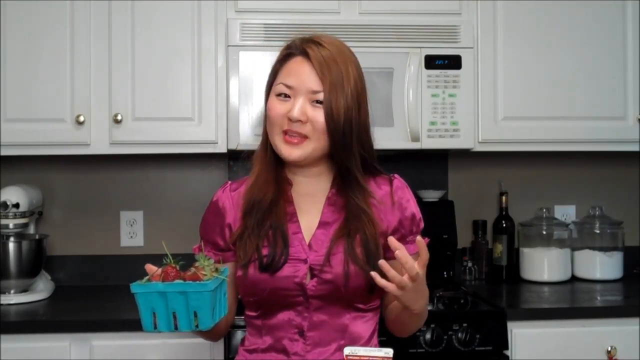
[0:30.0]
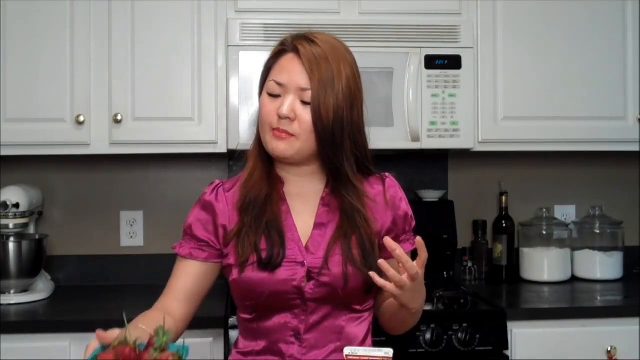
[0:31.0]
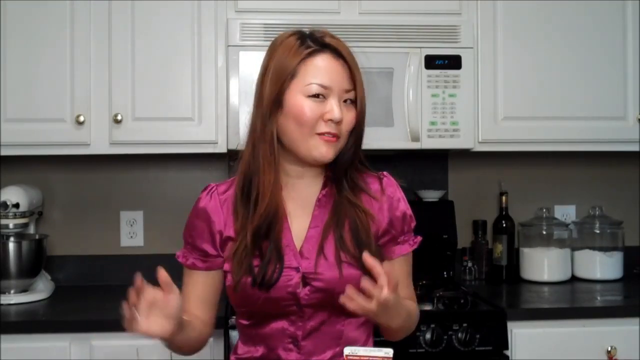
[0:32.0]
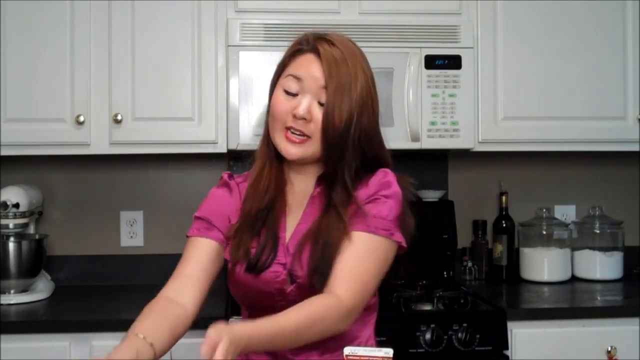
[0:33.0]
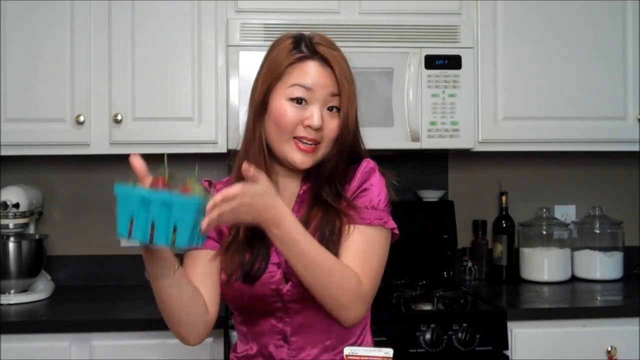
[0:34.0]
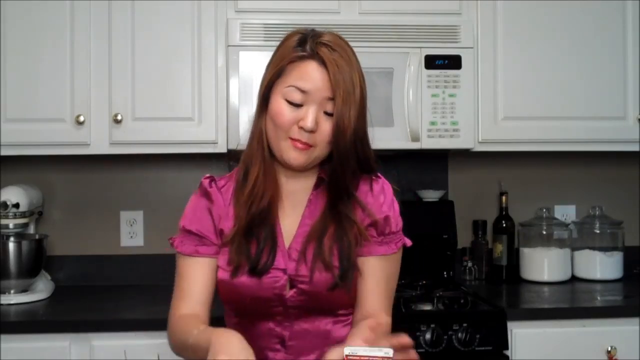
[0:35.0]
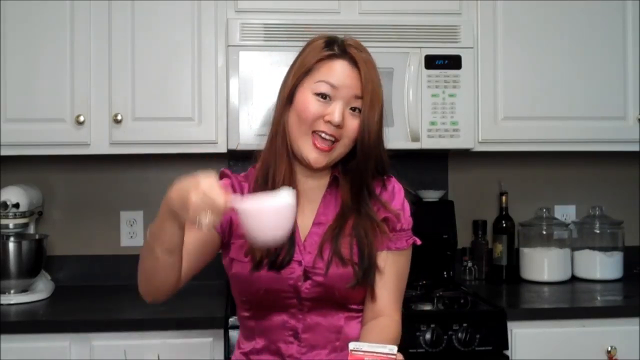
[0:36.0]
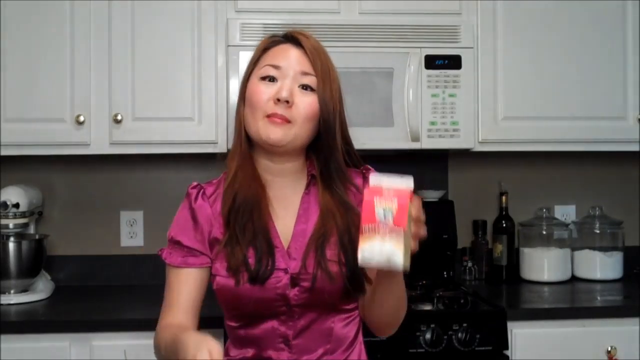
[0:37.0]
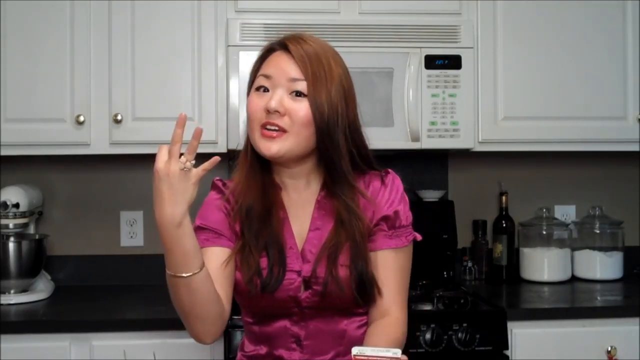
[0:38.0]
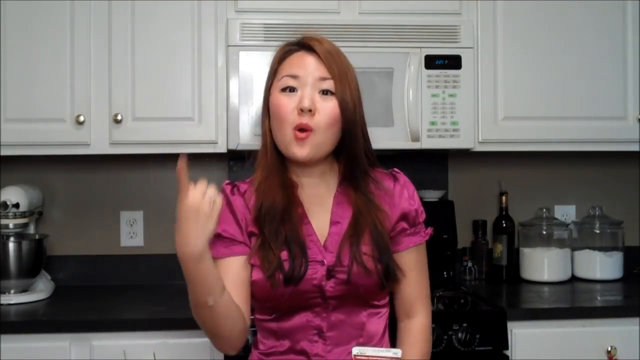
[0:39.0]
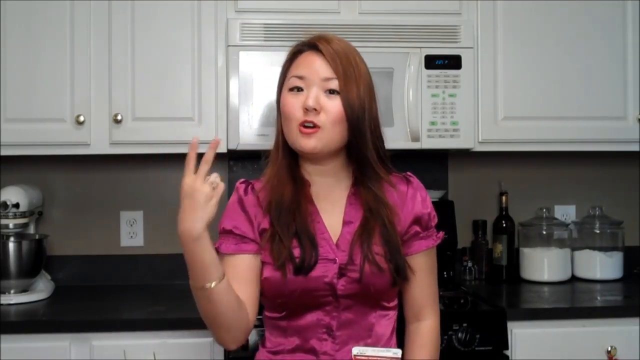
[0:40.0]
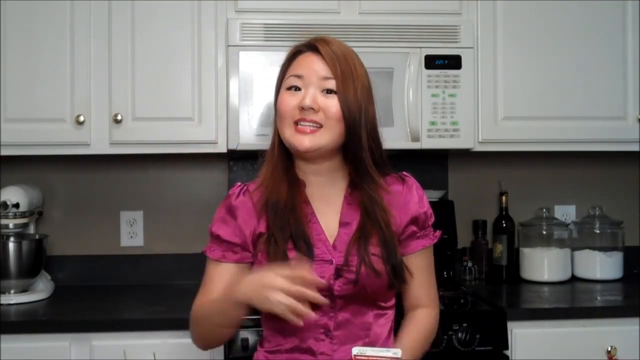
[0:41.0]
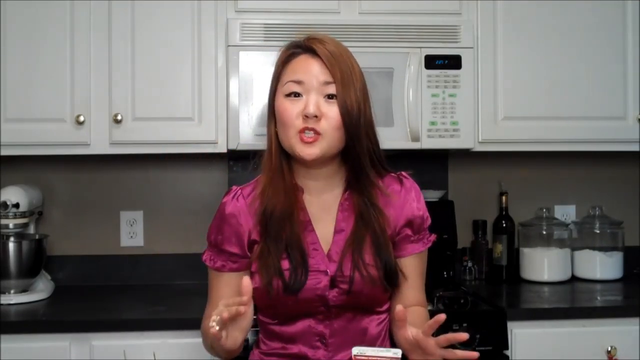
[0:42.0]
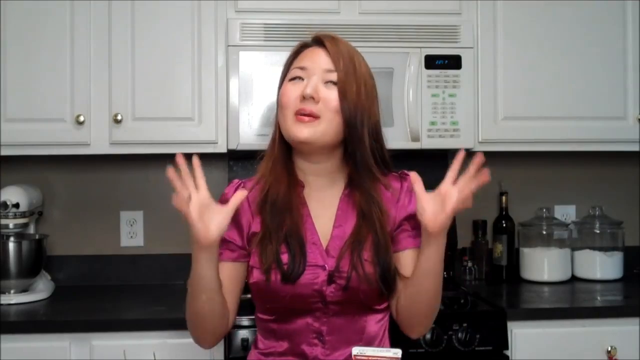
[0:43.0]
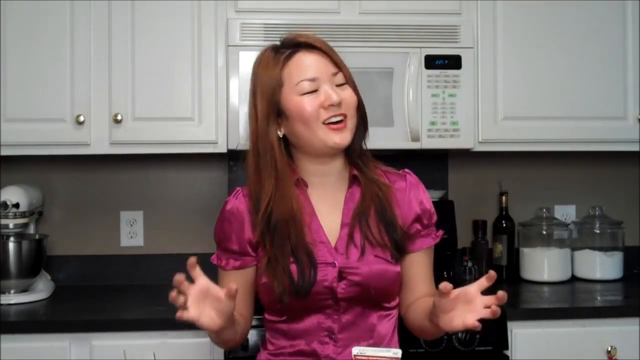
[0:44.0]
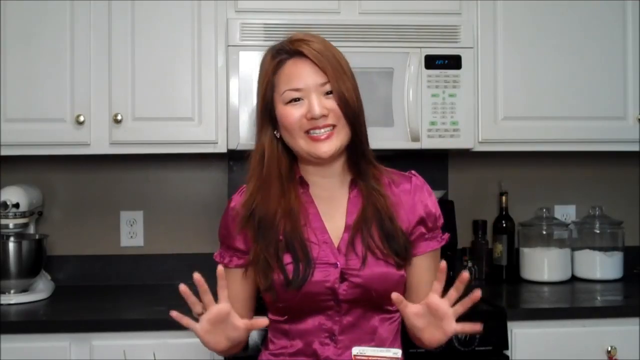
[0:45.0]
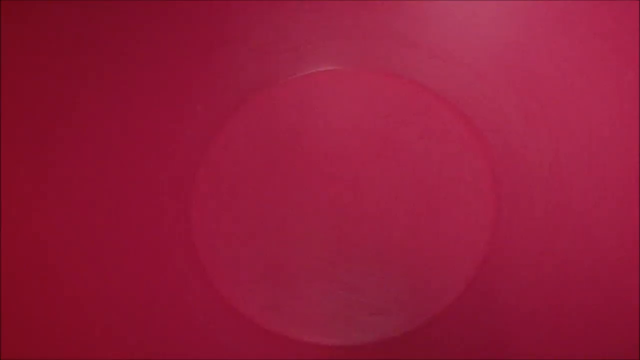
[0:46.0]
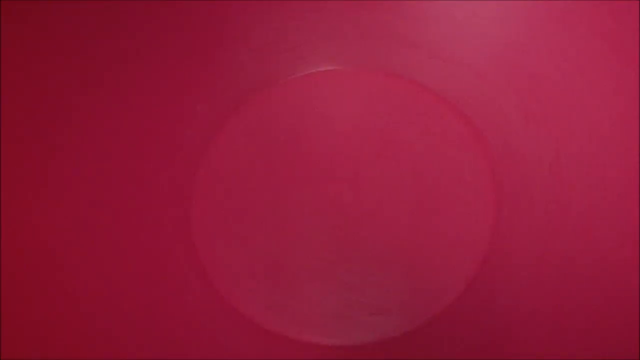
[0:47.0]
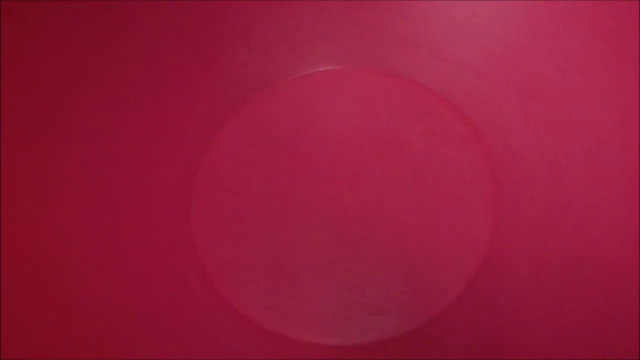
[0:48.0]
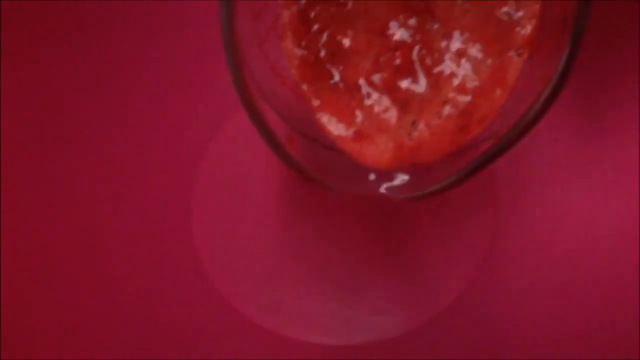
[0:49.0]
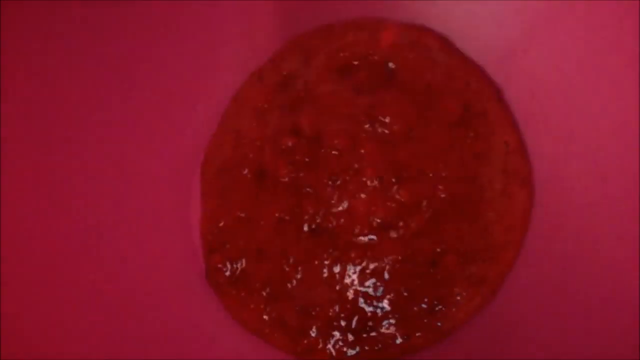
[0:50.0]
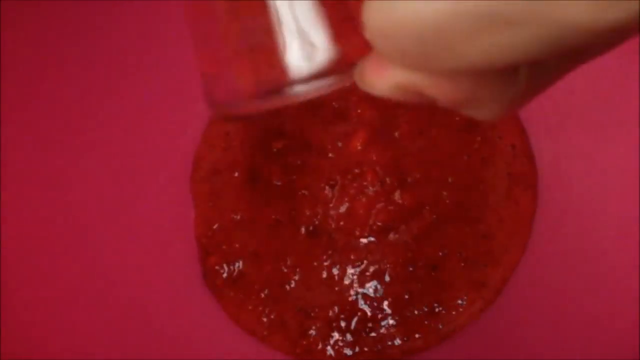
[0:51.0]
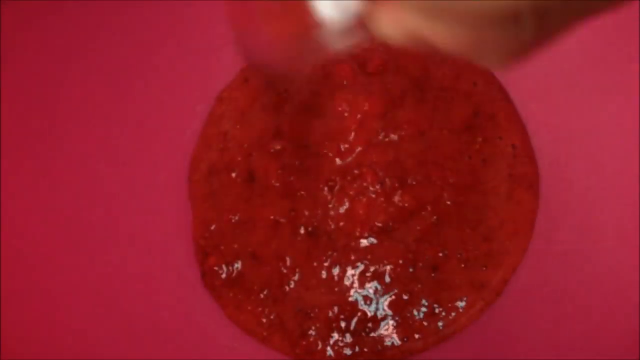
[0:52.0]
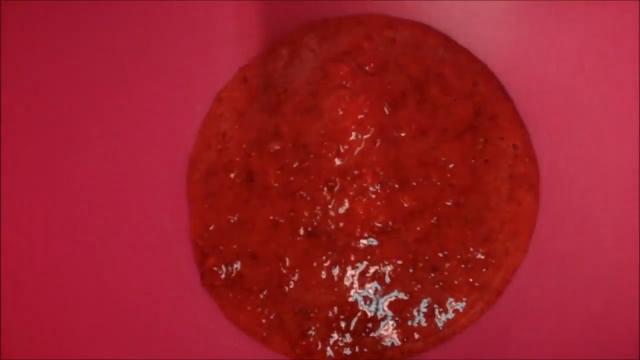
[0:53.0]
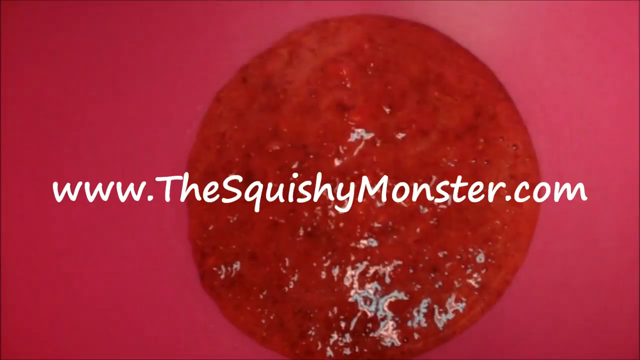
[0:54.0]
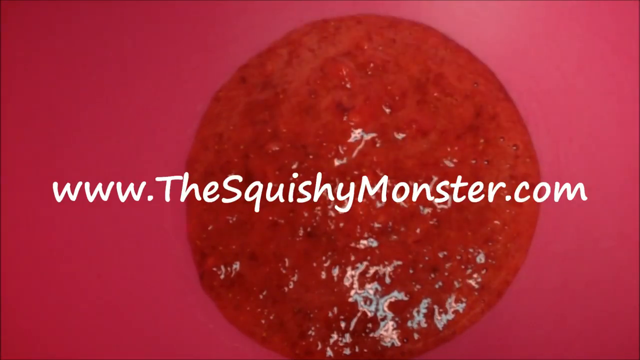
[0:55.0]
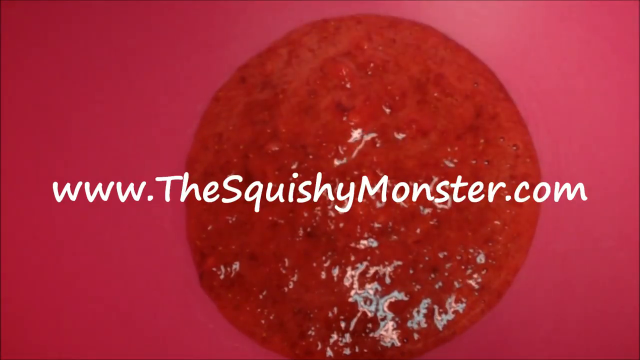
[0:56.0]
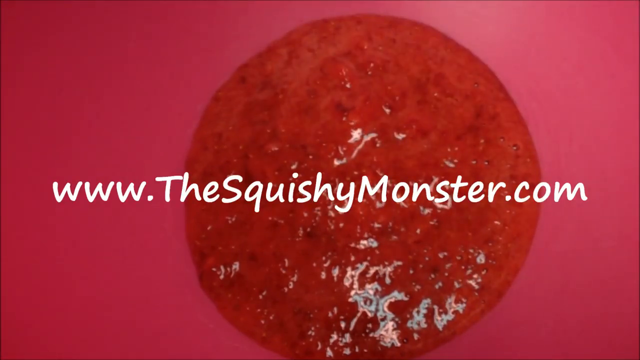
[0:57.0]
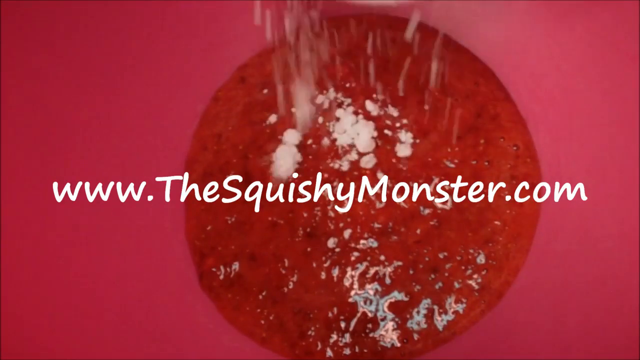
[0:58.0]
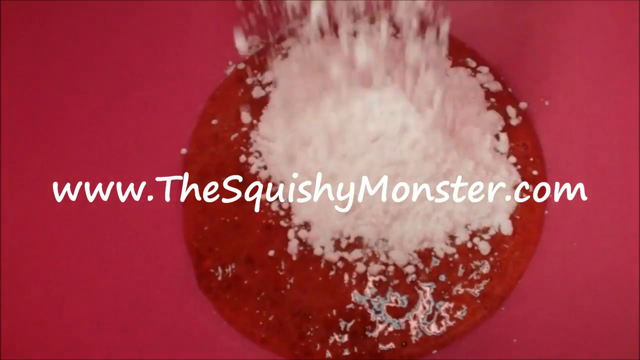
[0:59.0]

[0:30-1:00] A woman stands in a kitchen, speaking to the camera and displaying ingredients for a dish she is about to prepare. She wears a short-sleeved shiny fuchsia blouse and has long brown hair. Behind her, the kitchen cabinets and microwave oven are white, and the range top and counters are black. She picks up three ingredients in succession: a blue pint container of strawberries, a white plastic measuring cup filled with a white powder, and a carton of whipping cream. As she puts these down, she holds up her hand and raises three fingers to indicate that there are only three ingredients in the dish. The scene then changes to a close-up inside a fuchsia mixing bowl, where someone pours a red puree into it from a glass measuring cup. Then "www.The SquishyMonster.com" appears on the screen as someone begins sprinkling a white powder on top of the red puree.